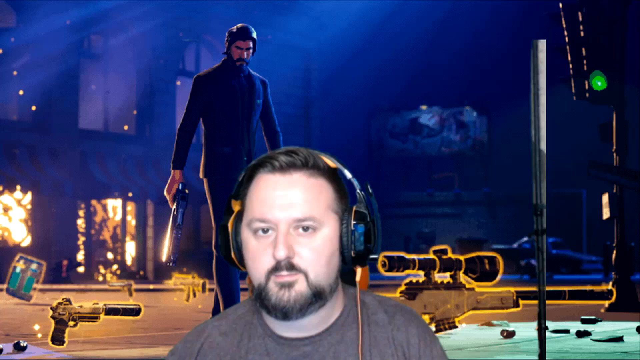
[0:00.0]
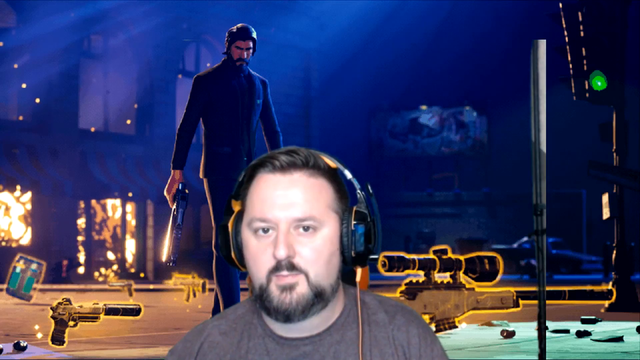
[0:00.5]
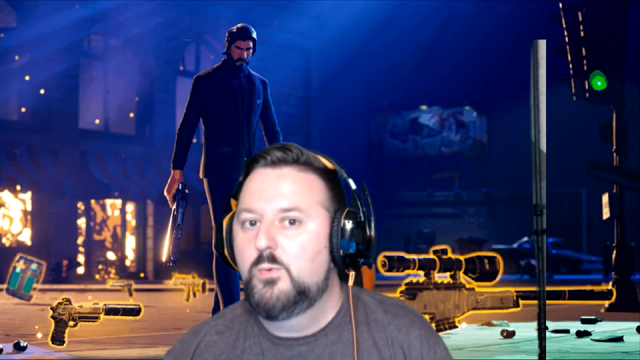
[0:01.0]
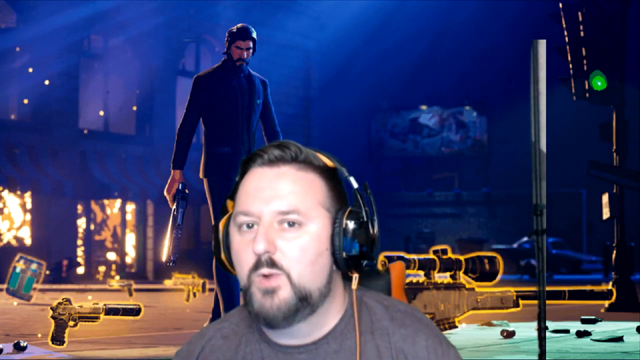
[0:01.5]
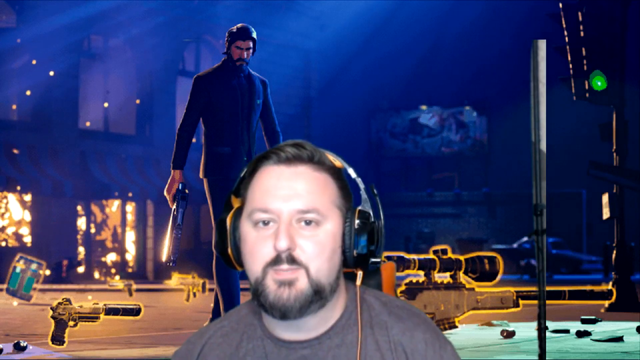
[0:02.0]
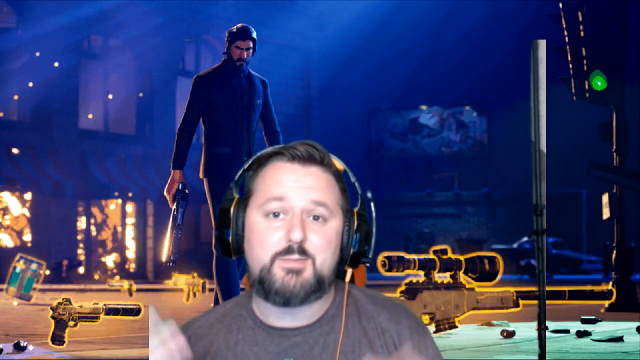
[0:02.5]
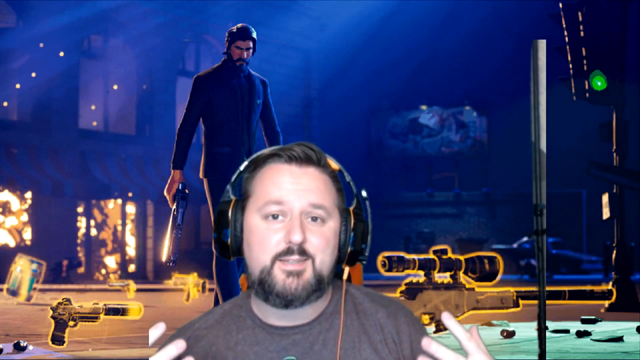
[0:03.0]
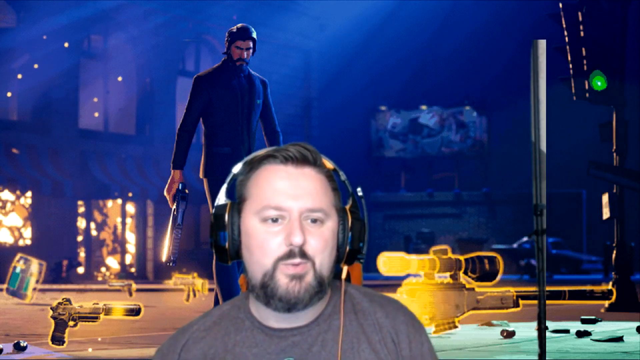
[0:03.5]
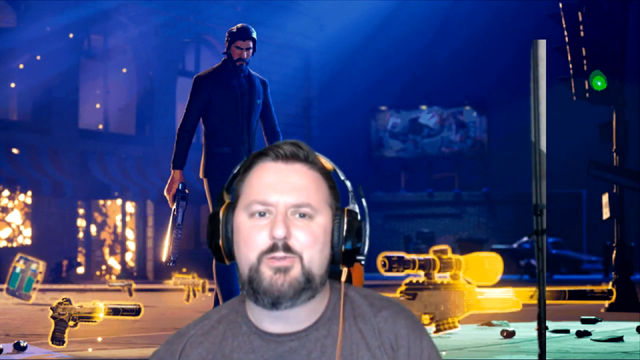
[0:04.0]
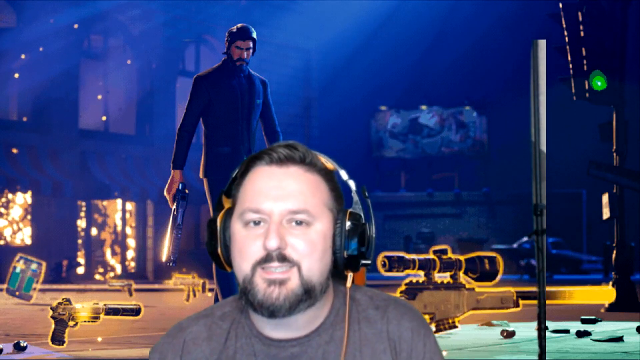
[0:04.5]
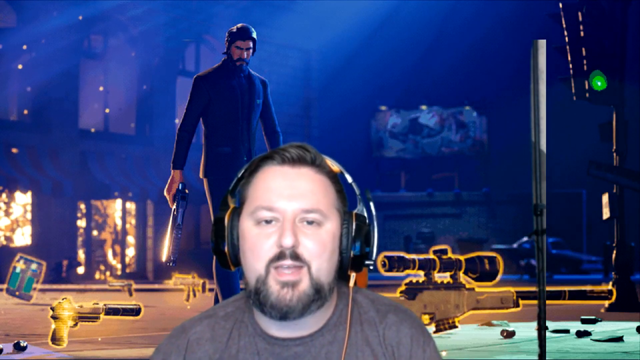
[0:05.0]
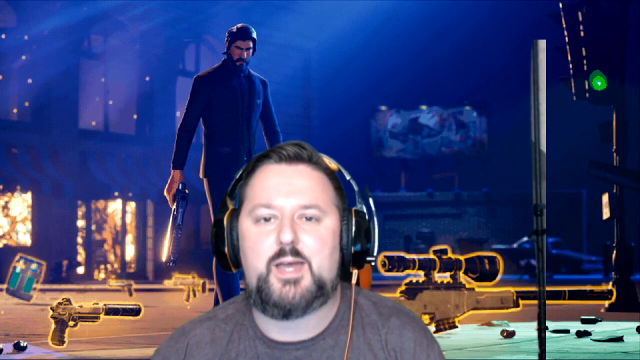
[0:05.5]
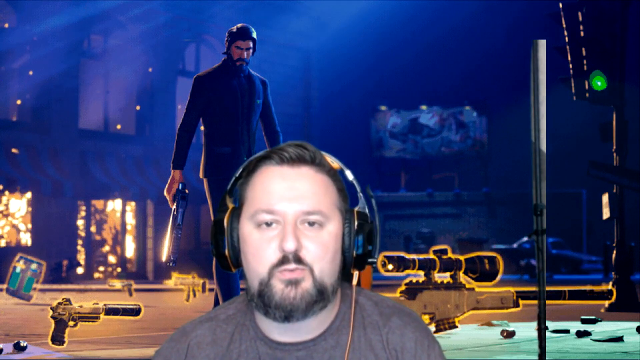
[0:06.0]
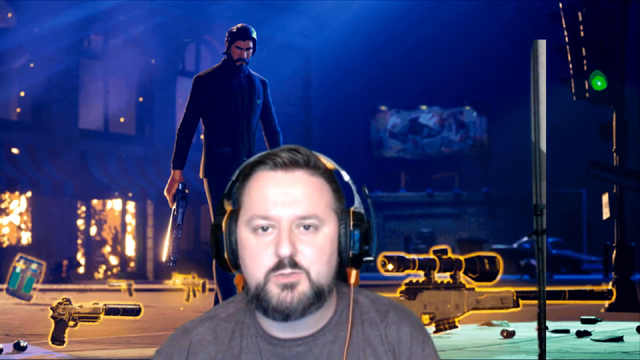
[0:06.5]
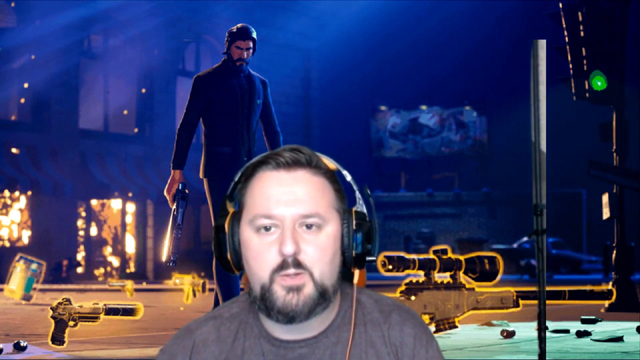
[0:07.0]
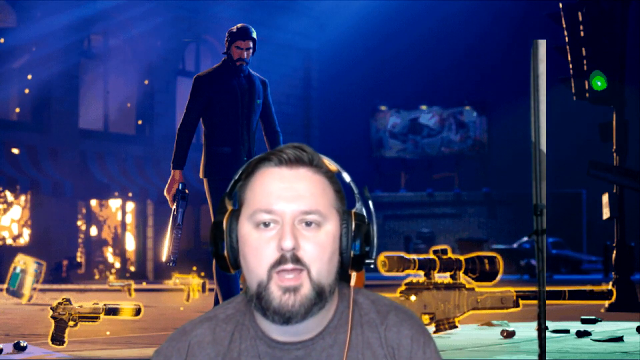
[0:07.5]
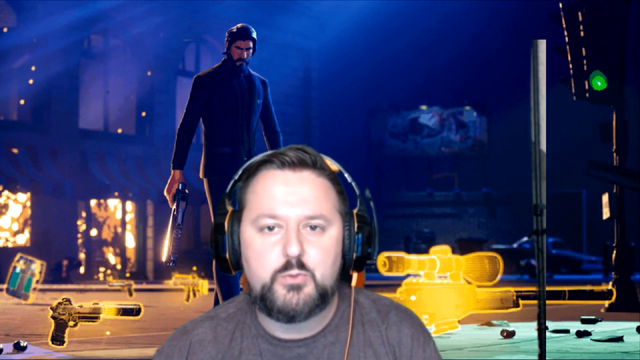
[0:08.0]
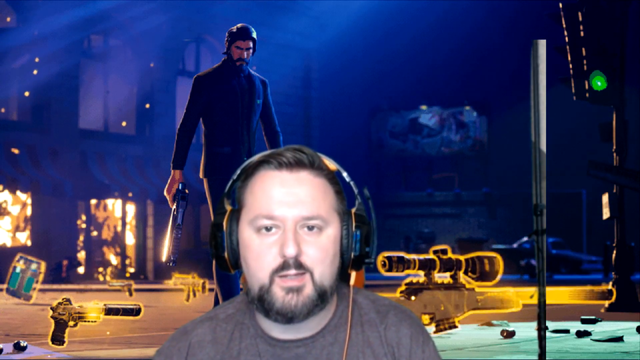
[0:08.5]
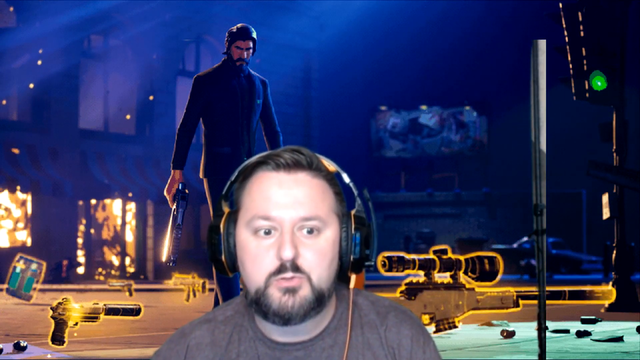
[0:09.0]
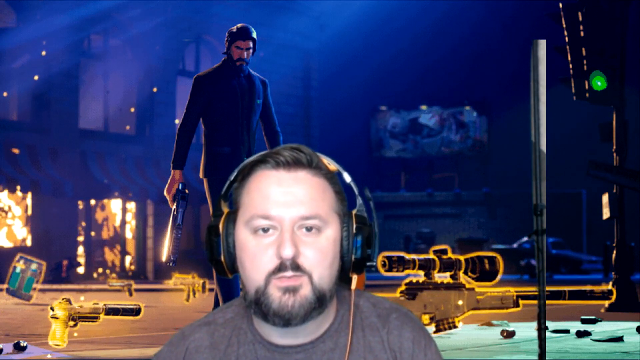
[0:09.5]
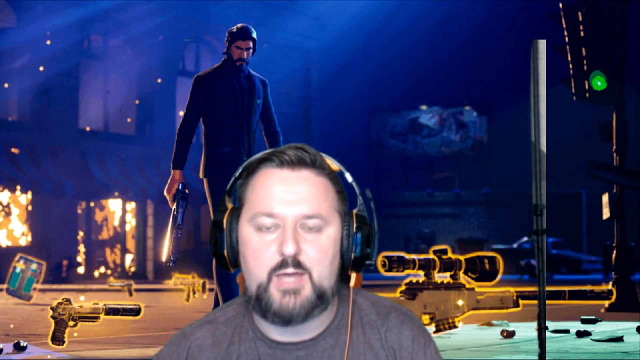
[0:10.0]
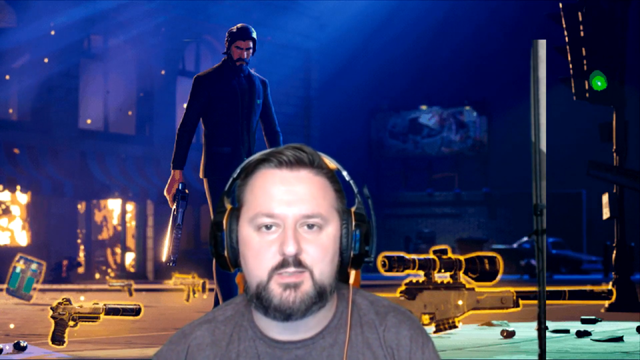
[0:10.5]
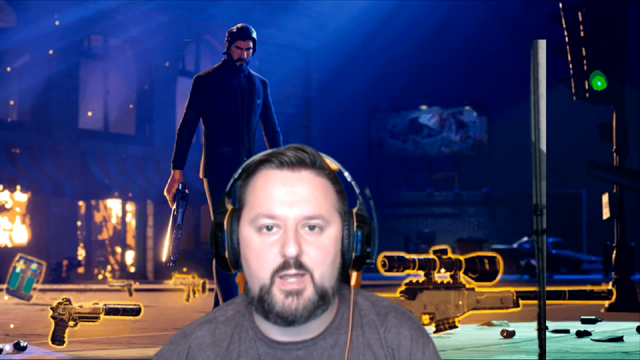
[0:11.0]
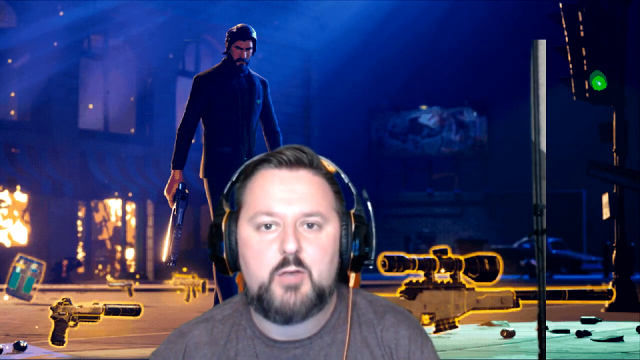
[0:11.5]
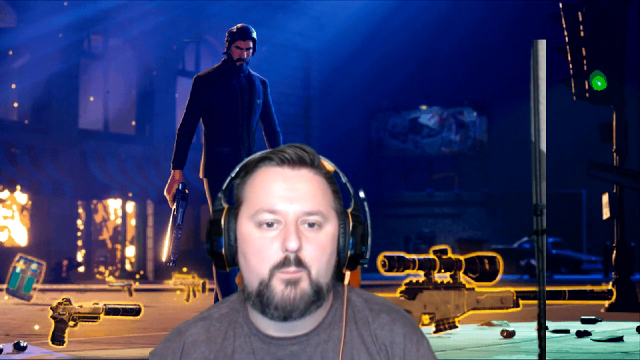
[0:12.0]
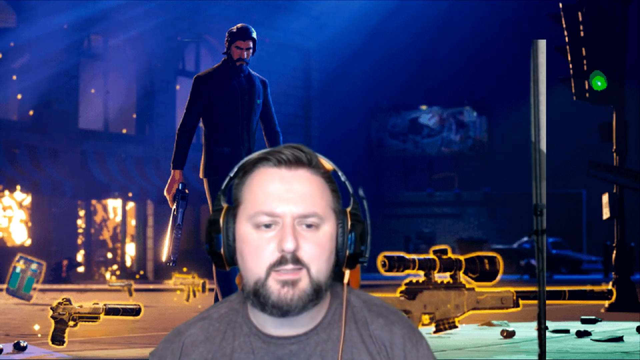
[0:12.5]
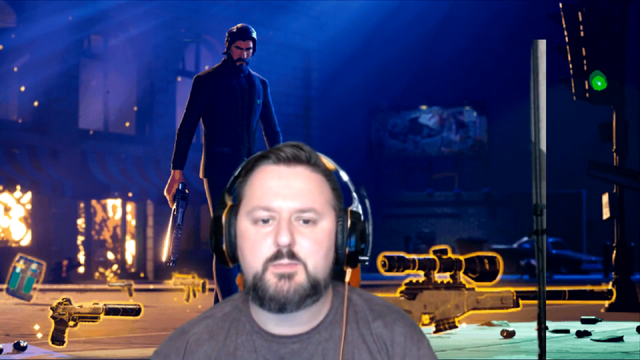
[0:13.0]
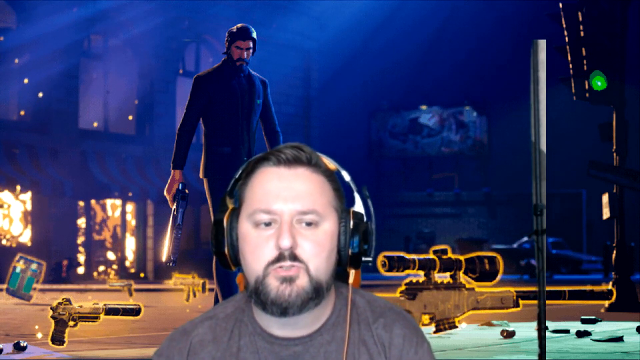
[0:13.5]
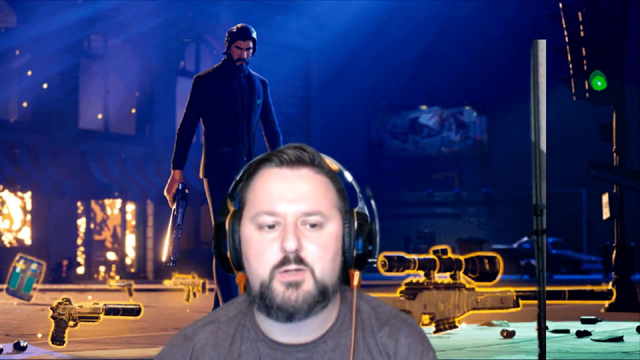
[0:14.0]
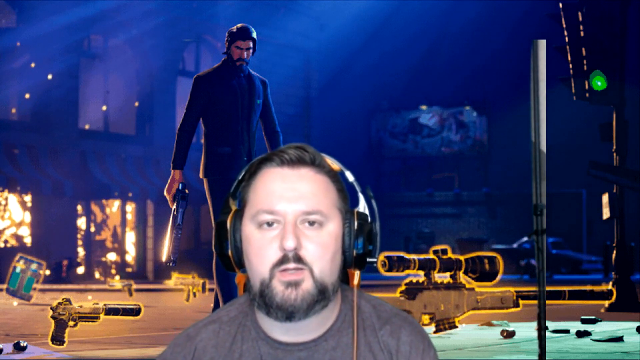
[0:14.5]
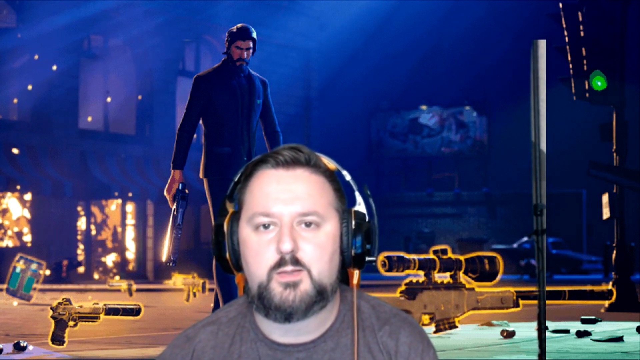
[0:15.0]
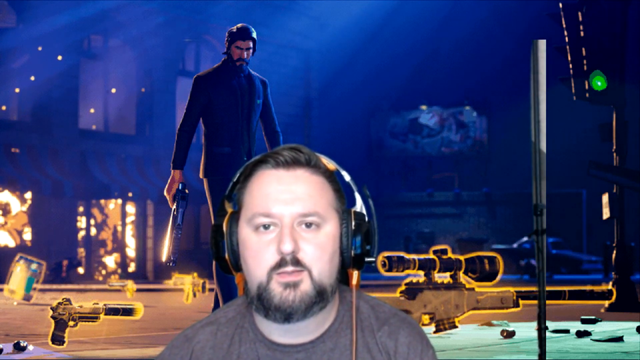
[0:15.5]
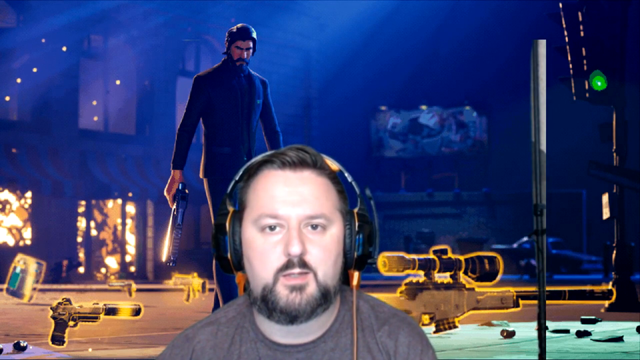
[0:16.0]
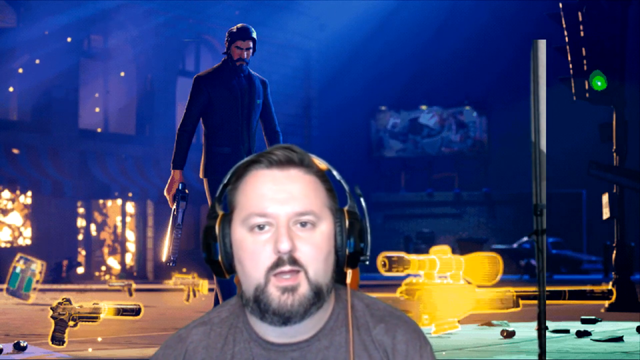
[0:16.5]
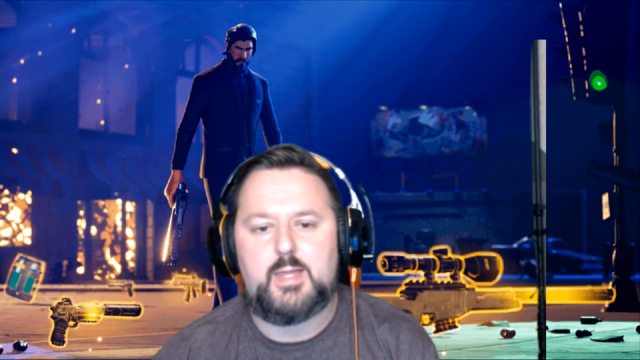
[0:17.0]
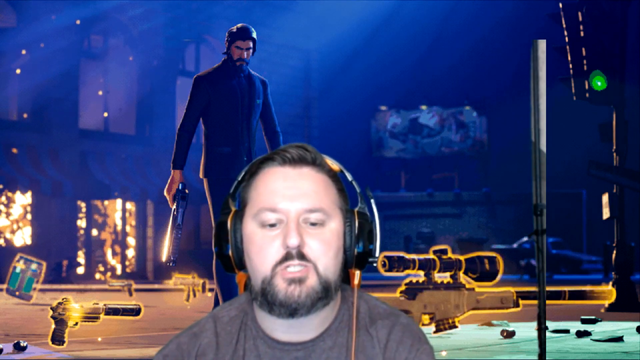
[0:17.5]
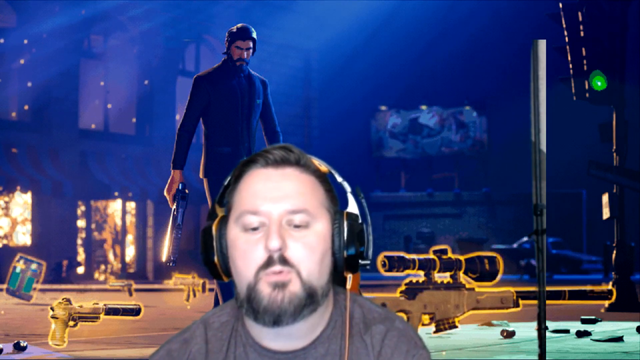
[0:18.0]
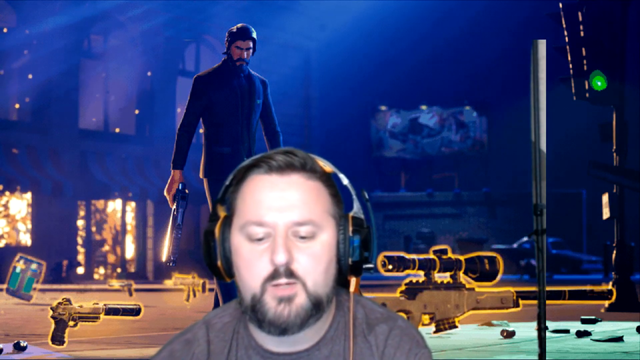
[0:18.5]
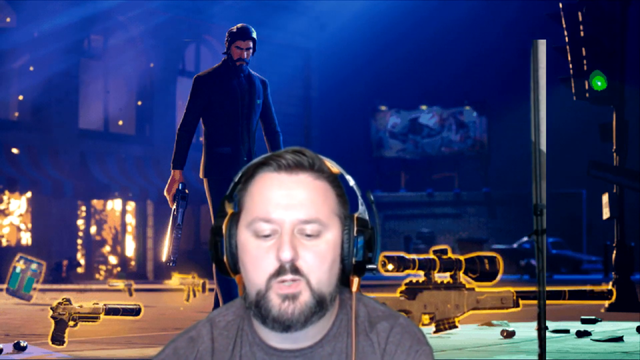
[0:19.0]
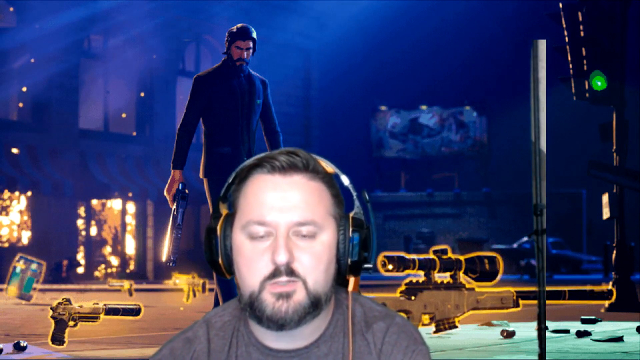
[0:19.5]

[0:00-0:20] A Caucasian man with a dark brown beard and brown eyes looks at the camera with headphones on. In the background is what looks like John Wick in a black suit, holding a gun, with blue light coming in from the background and different gun selections across the screen. Behind the video game John Wick, there is a building with approximately five or six windows and a door, with a fire going on inside. There appears to be a screen on the right side of John Wick, and the light comes from the upper right-hand corner. A bunch of floating guns fill the bottom half of the screen: one bigger gun with a scope and multiple smaller guns, some of which look like handguns and others like automatics. There are about two automatic weapons and two handguns, one of the handguns with a silencer.